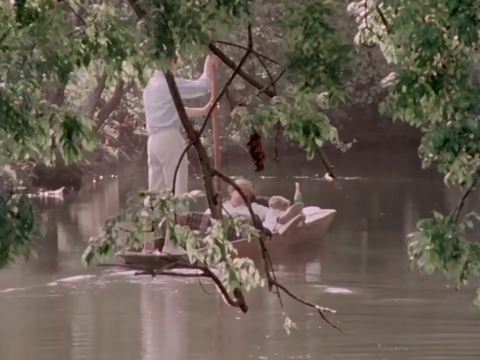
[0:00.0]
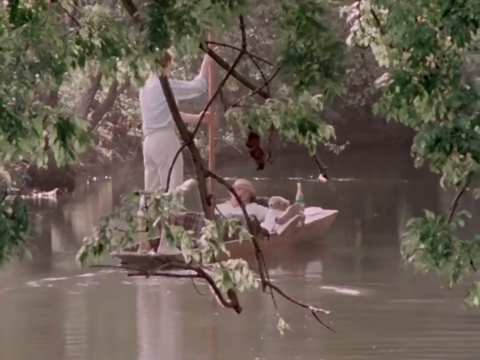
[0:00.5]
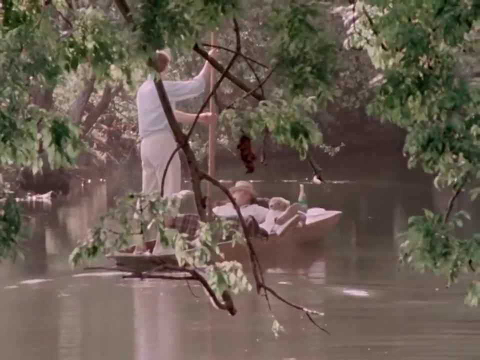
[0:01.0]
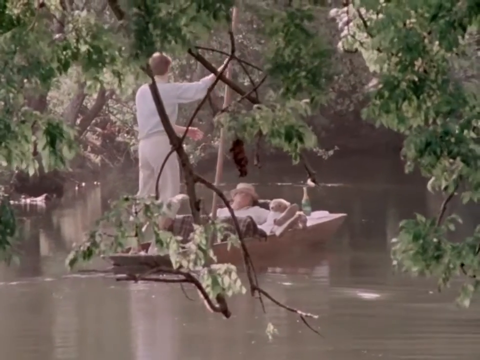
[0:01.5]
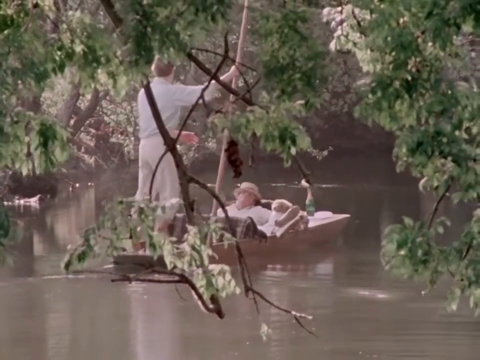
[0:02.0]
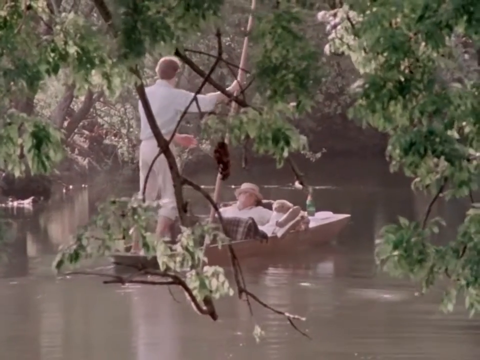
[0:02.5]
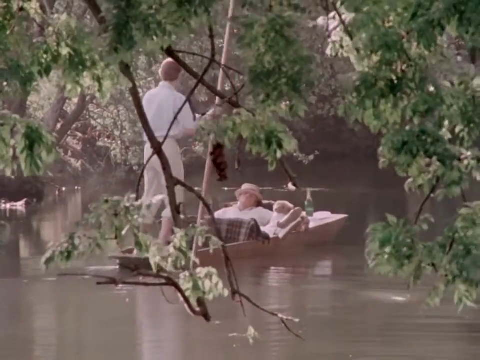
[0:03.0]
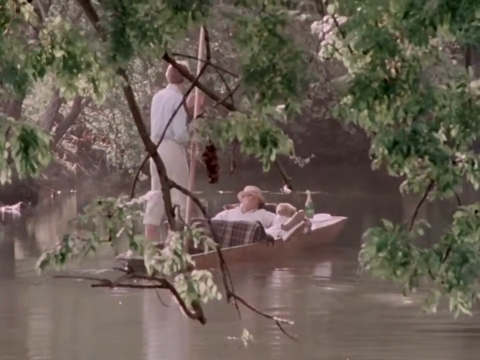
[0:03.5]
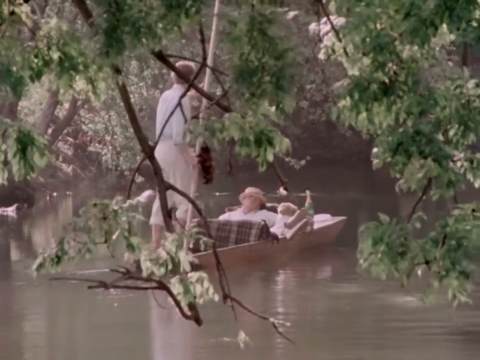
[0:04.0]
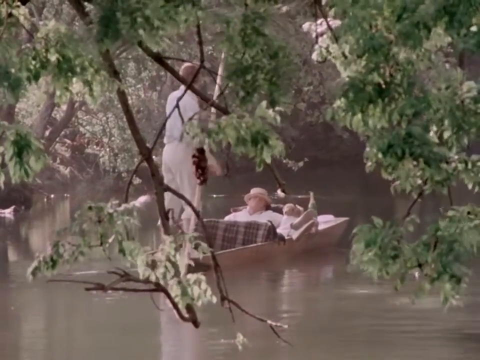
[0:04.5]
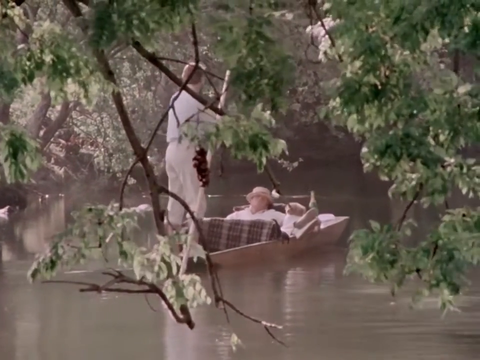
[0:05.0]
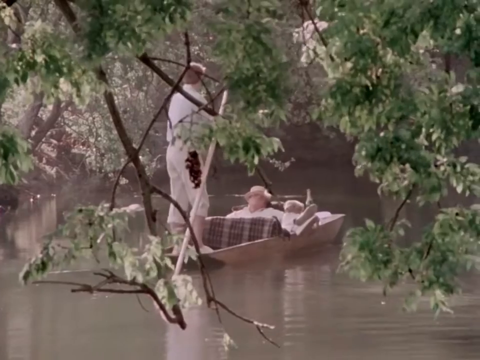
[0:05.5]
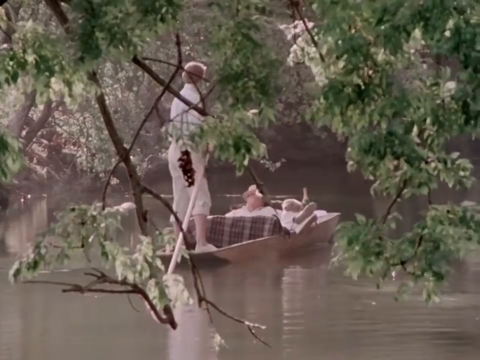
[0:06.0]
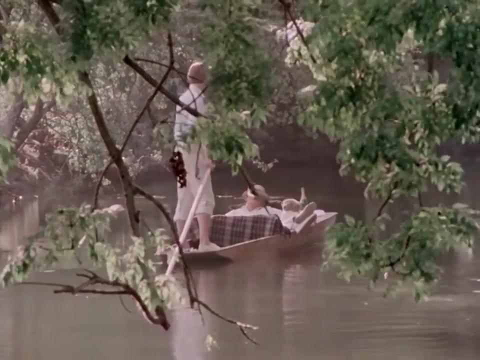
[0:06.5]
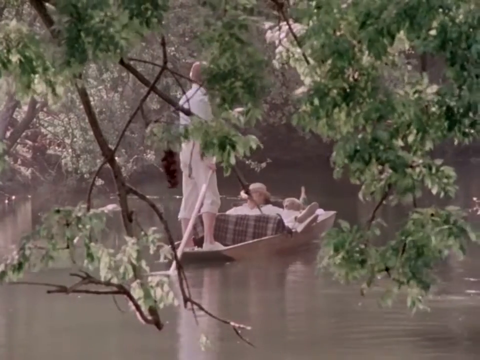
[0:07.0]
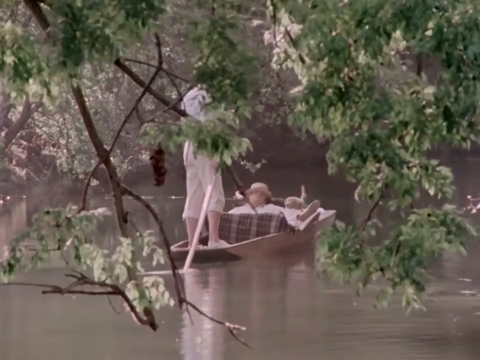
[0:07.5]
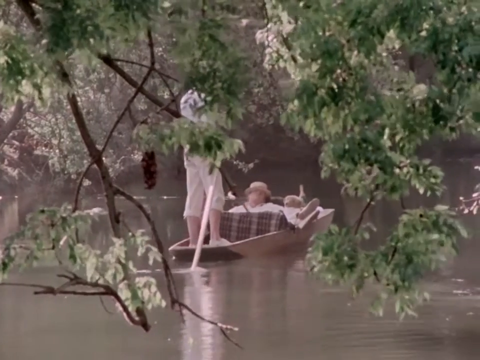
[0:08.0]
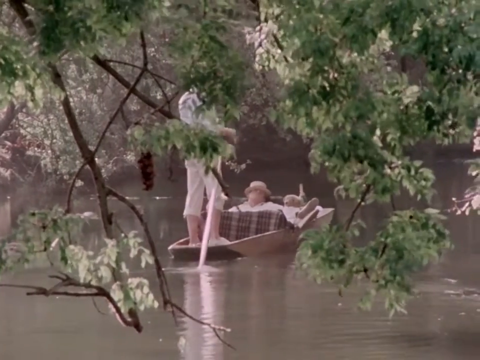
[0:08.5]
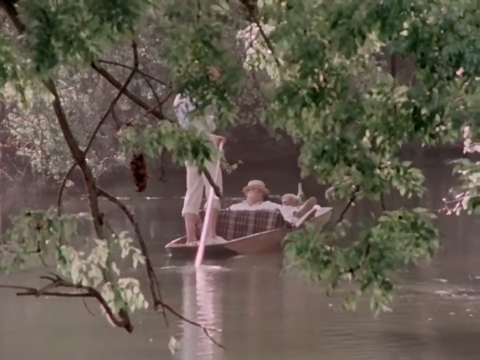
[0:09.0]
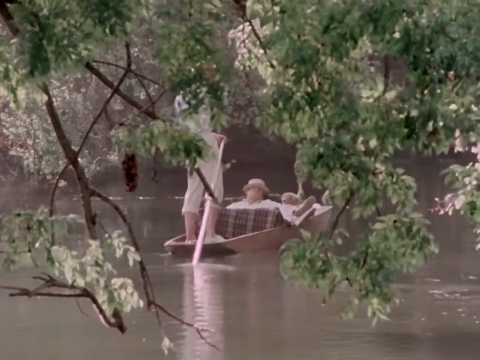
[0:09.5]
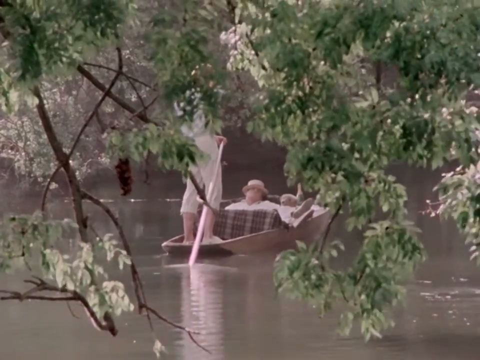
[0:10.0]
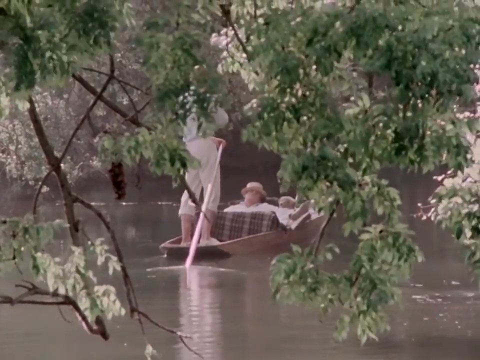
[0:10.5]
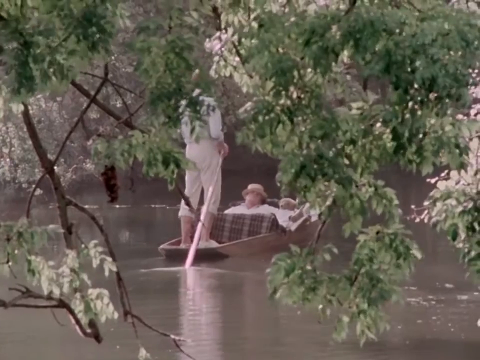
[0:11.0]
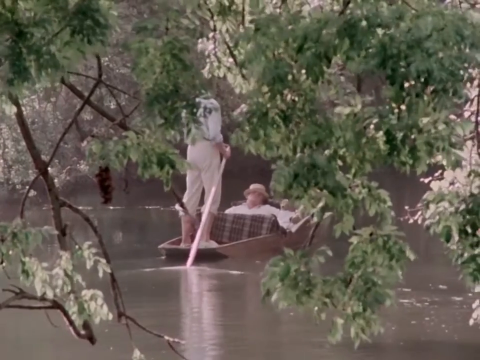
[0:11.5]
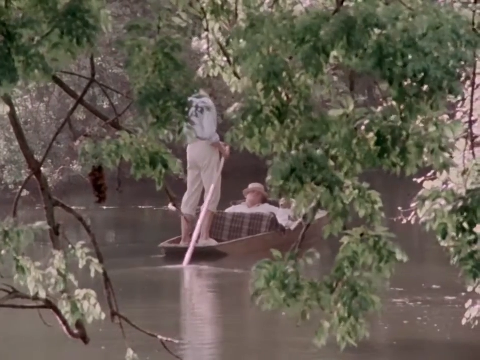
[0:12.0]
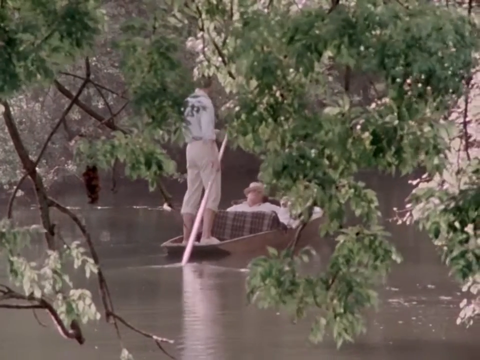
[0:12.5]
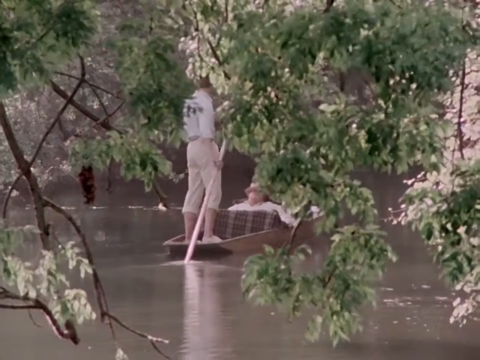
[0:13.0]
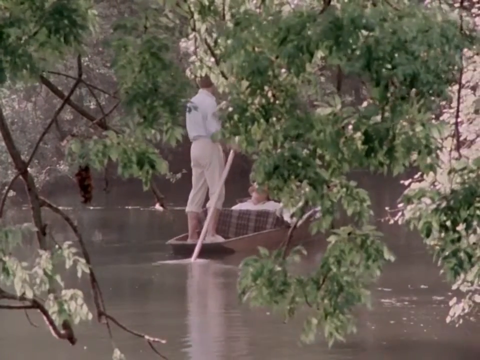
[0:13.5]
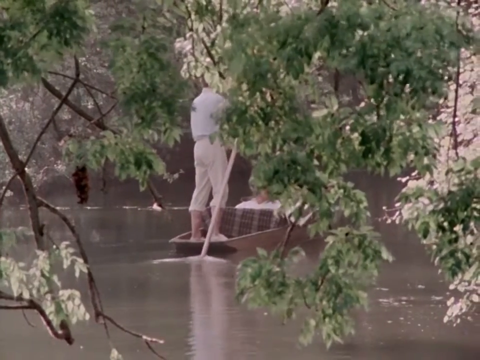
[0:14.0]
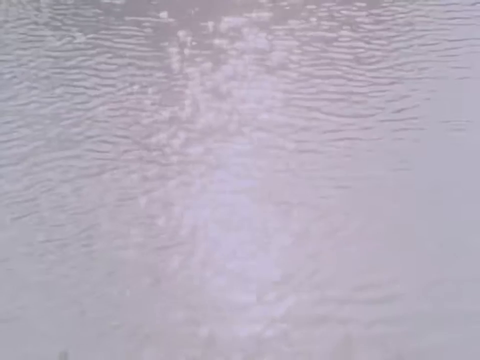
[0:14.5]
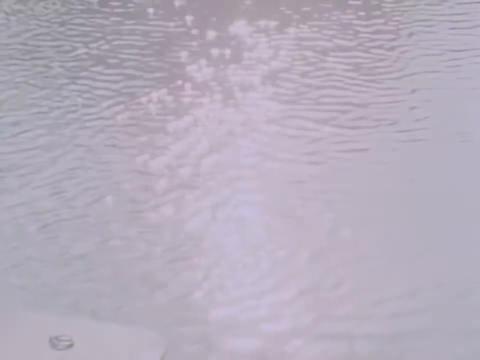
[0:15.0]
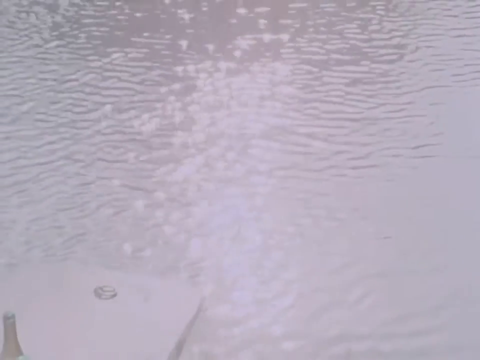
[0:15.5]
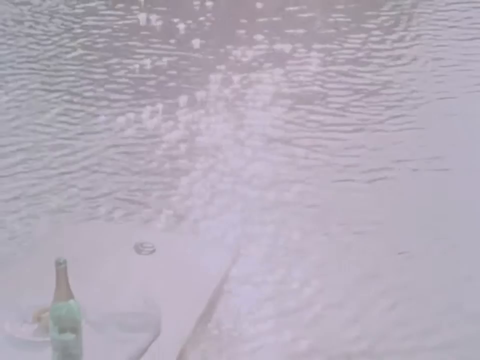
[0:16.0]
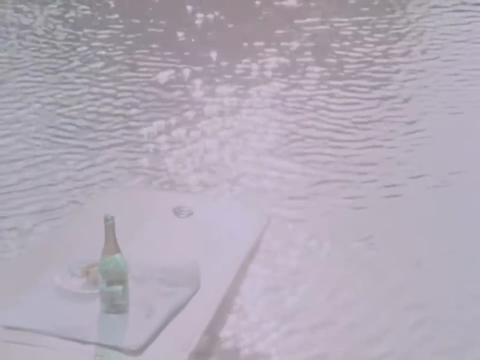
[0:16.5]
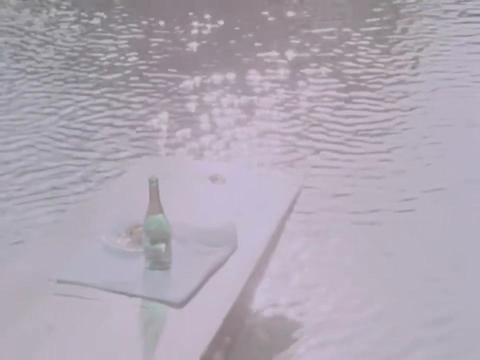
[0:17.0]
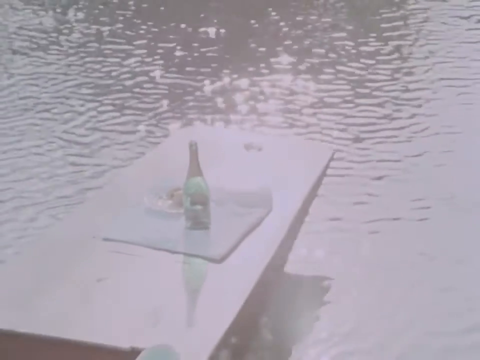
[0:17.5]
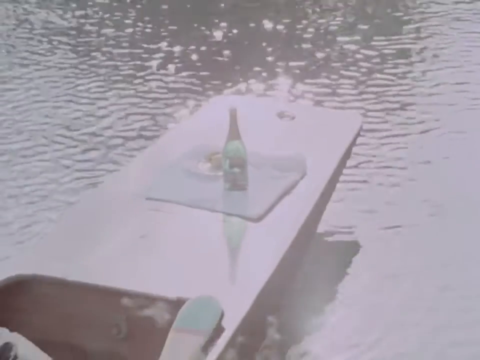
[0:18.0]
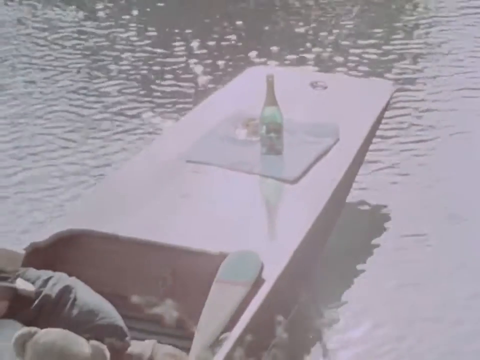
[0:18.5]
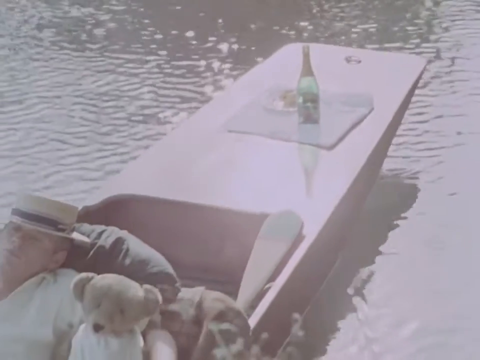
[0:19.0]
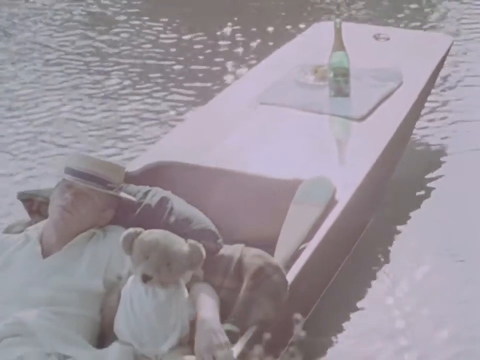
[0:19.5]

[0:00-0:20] Tree limbs in the foreground hang down towards a waterway of some kind. On the water is a boat of the type called a pirou, similar to a dugout canoe but flat at both the bow and the stern, where someone stands on the flat portion and pulls the boat through the water, which is what is happening here. Standing in the stern, the back of the boat, appears to be a young man pulling the boat through the waterway. In front of him, in the center of the pirou, an older man lies in the boat. He wears a straw hat and appears to have his left arm out around a teddy bear in the bow. On the bow of the pirou there appears to be a bottle of wine or champagne, and next to it a plate of some sort of food.